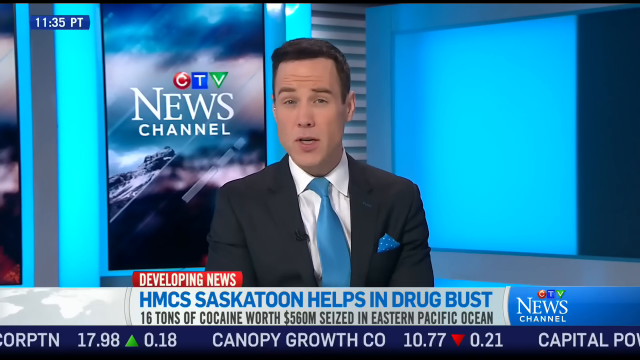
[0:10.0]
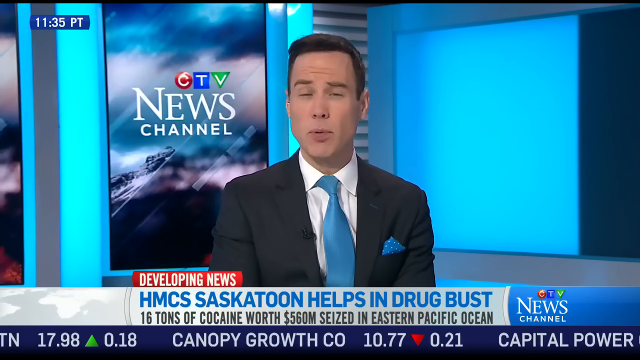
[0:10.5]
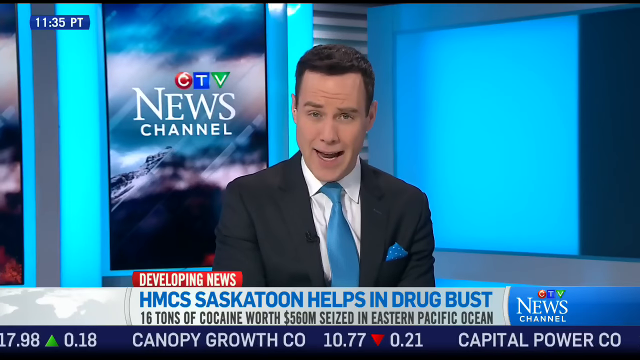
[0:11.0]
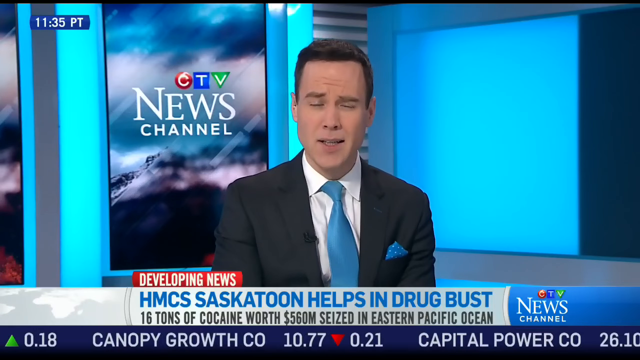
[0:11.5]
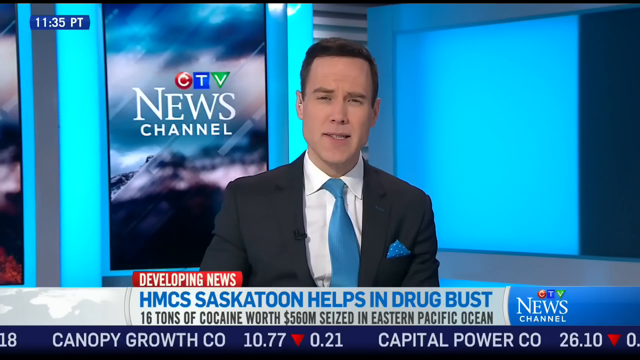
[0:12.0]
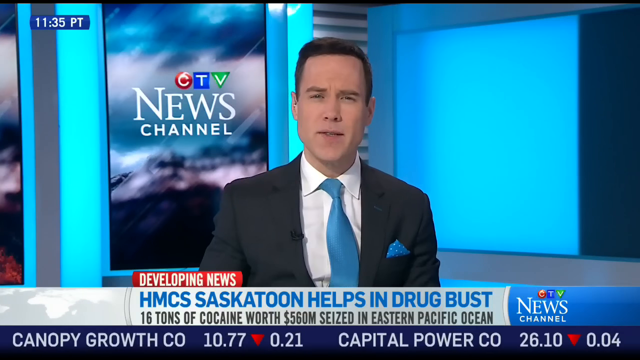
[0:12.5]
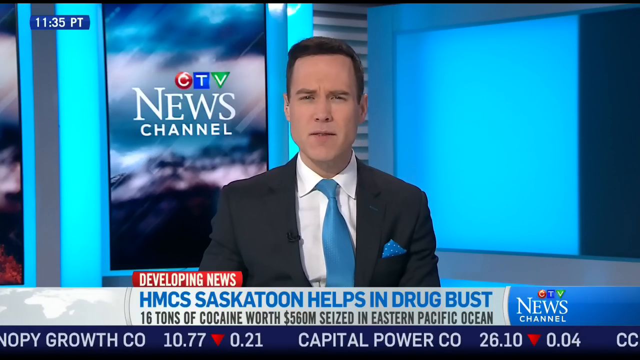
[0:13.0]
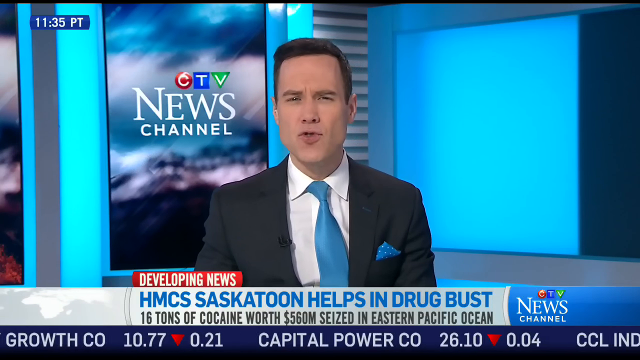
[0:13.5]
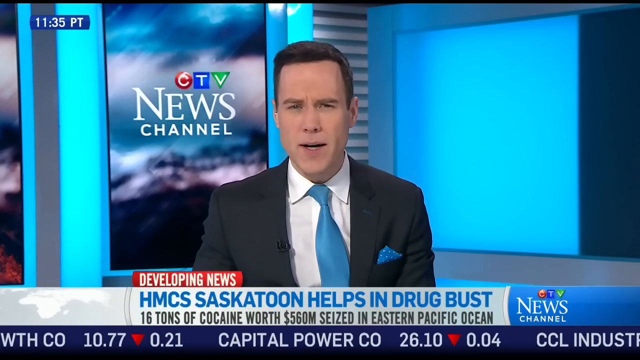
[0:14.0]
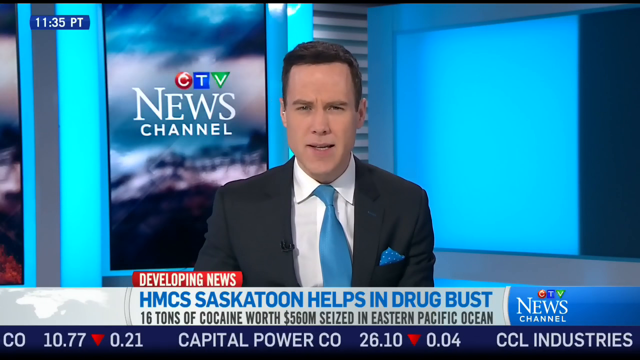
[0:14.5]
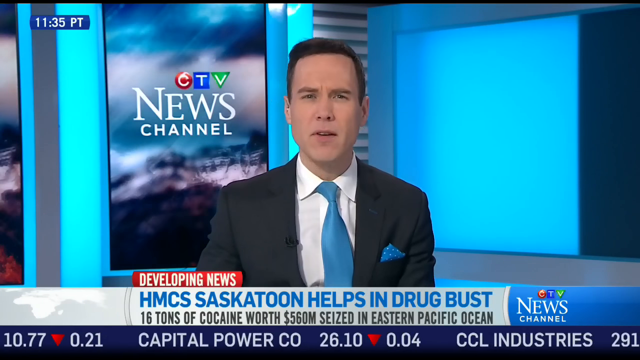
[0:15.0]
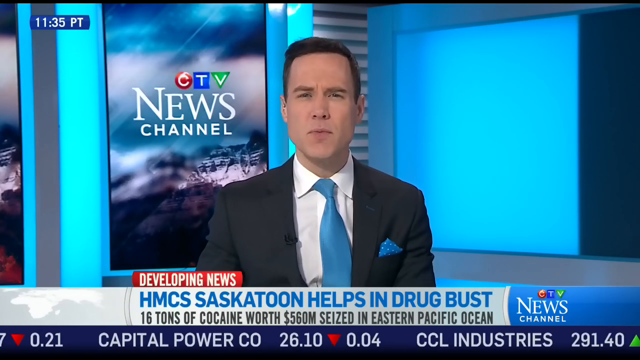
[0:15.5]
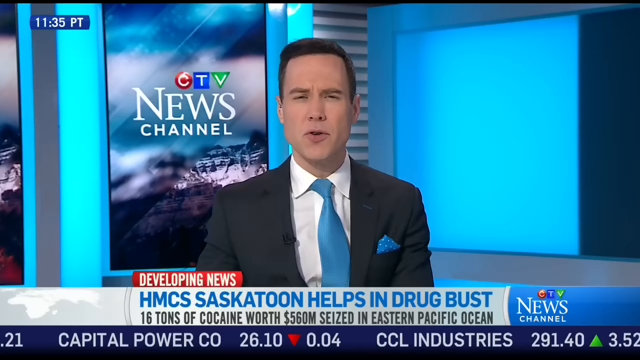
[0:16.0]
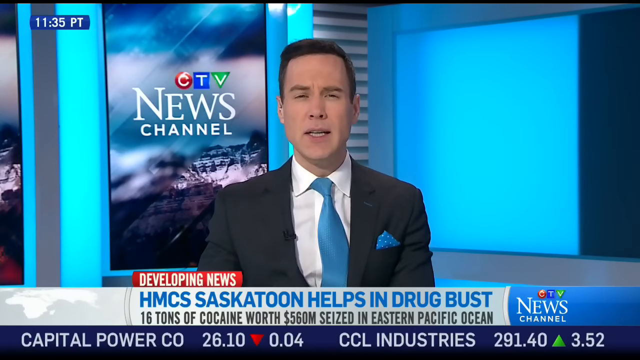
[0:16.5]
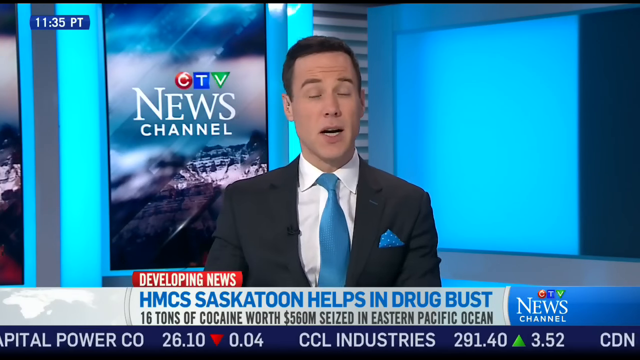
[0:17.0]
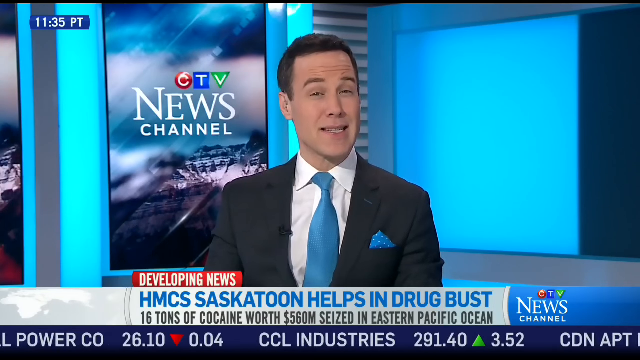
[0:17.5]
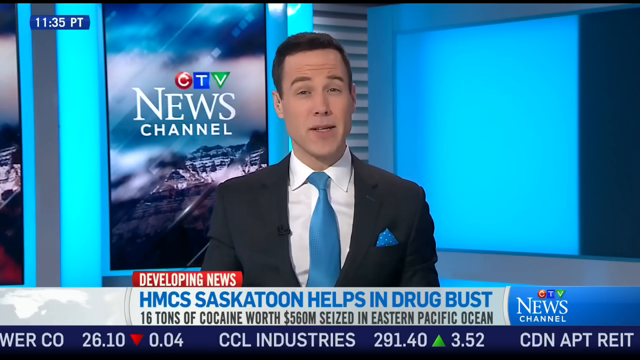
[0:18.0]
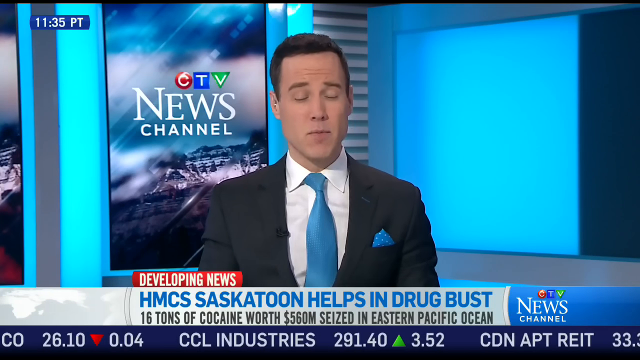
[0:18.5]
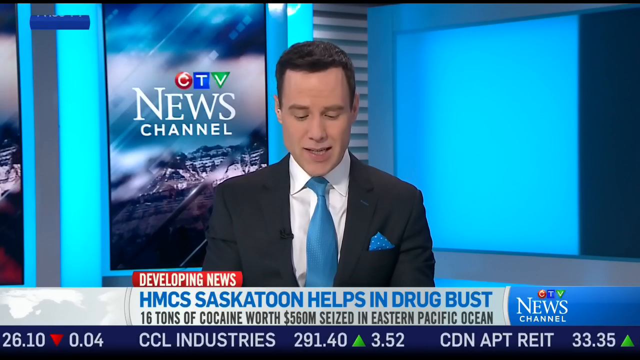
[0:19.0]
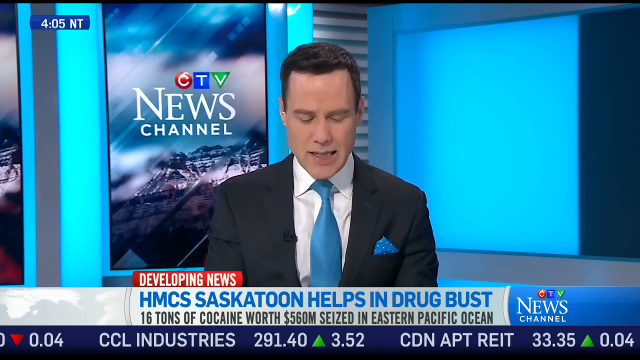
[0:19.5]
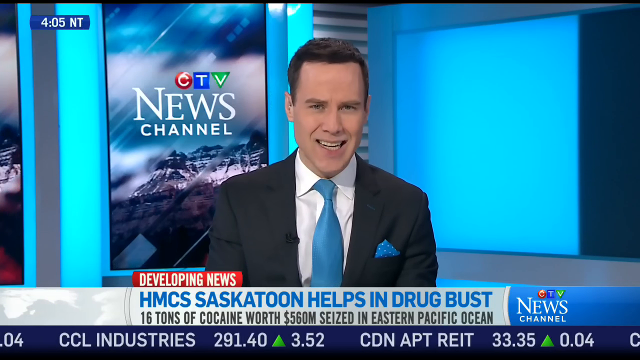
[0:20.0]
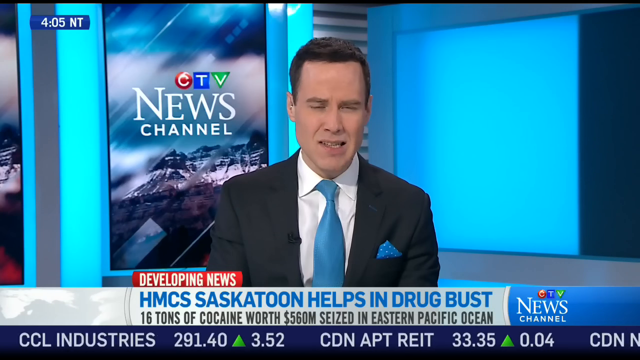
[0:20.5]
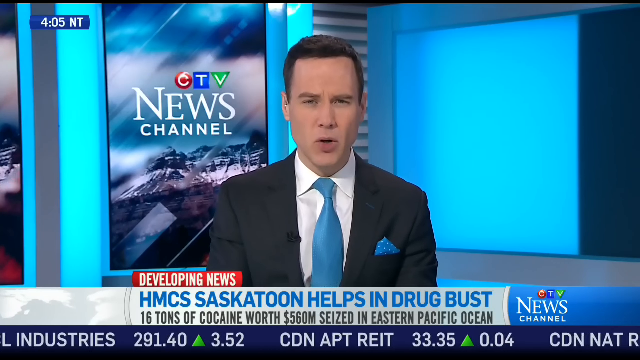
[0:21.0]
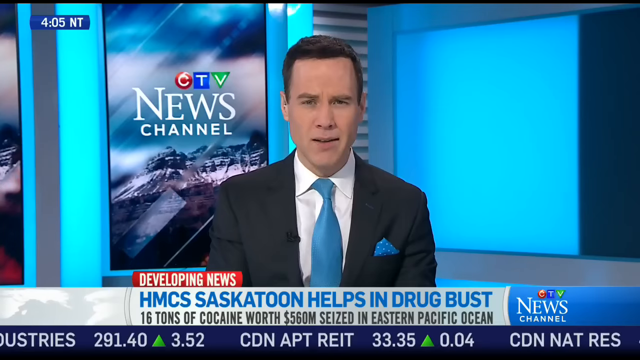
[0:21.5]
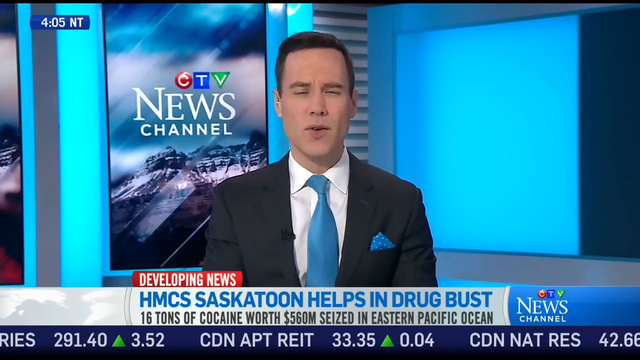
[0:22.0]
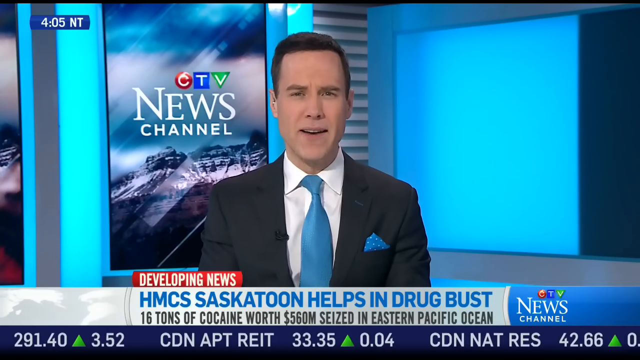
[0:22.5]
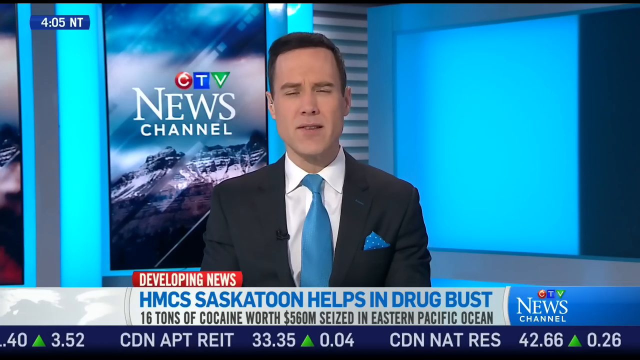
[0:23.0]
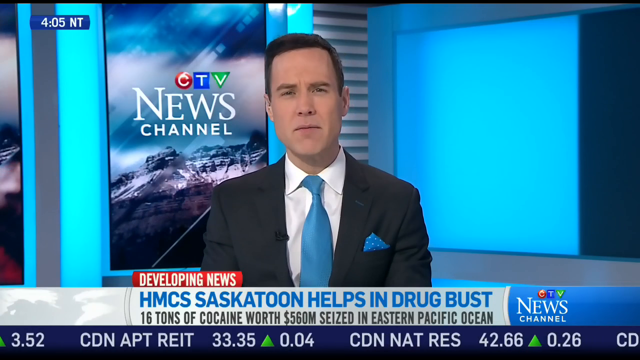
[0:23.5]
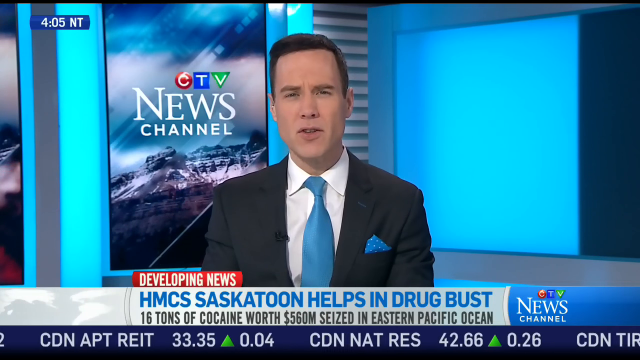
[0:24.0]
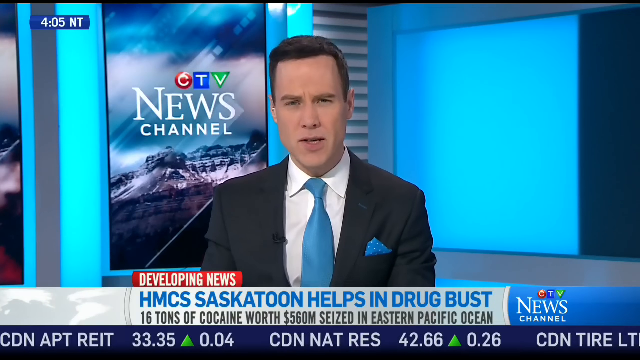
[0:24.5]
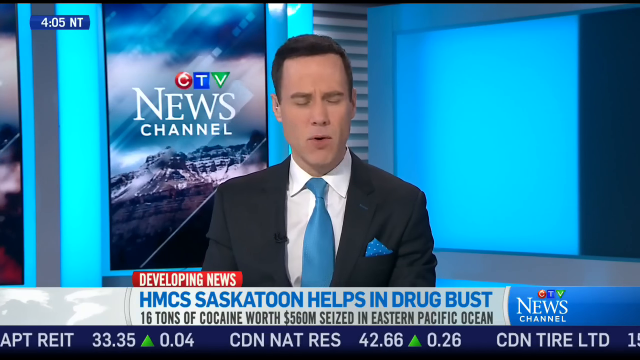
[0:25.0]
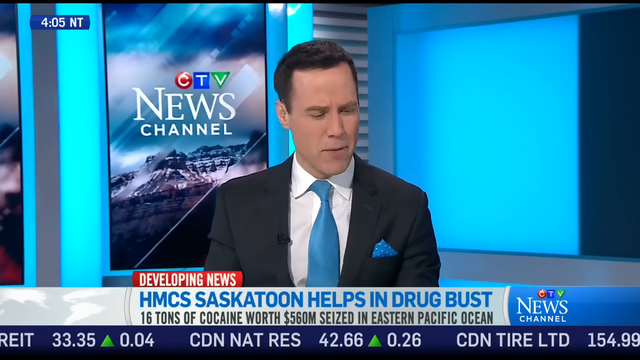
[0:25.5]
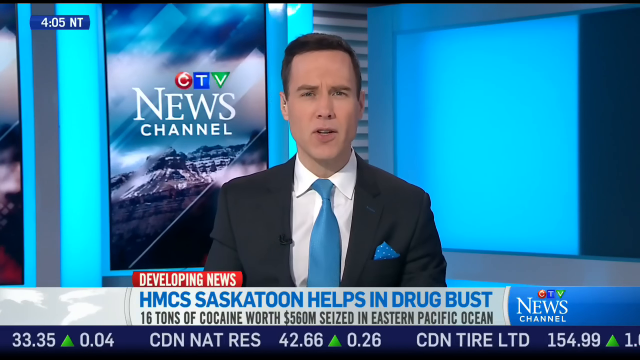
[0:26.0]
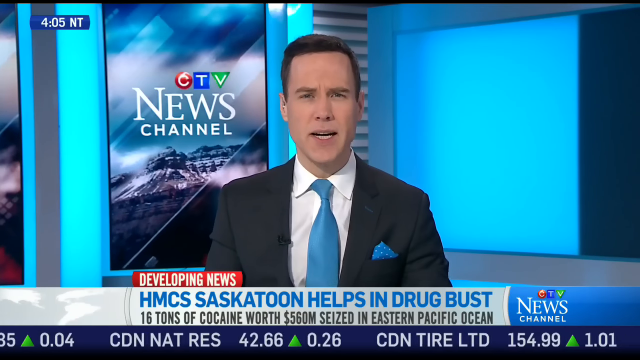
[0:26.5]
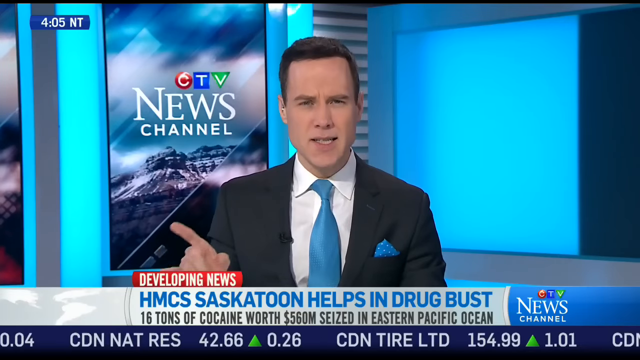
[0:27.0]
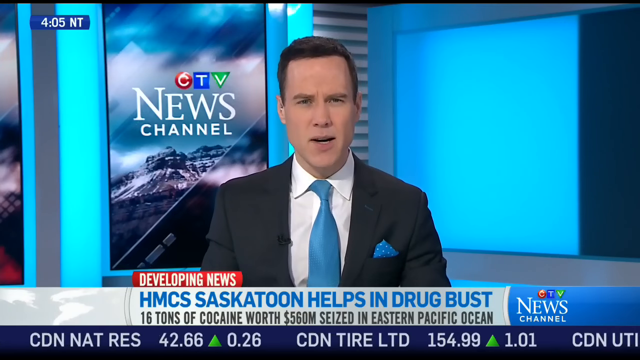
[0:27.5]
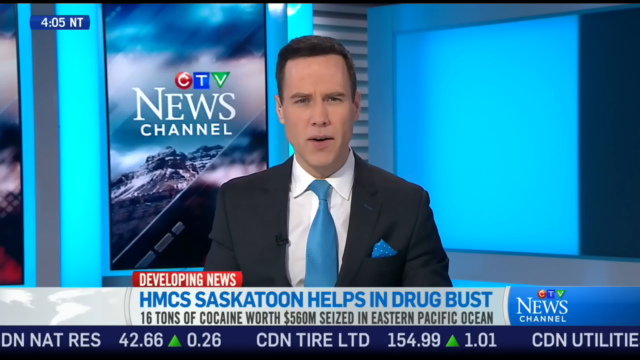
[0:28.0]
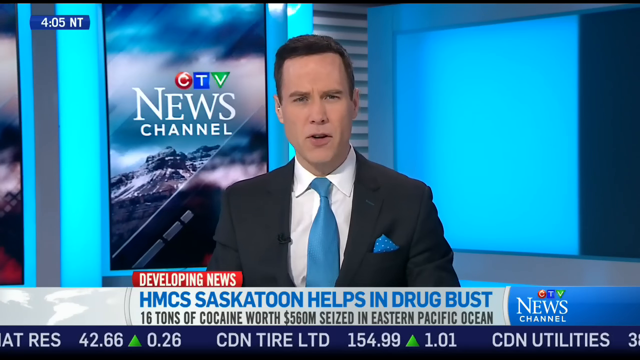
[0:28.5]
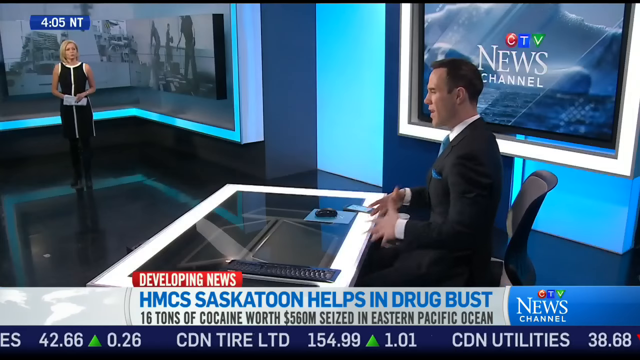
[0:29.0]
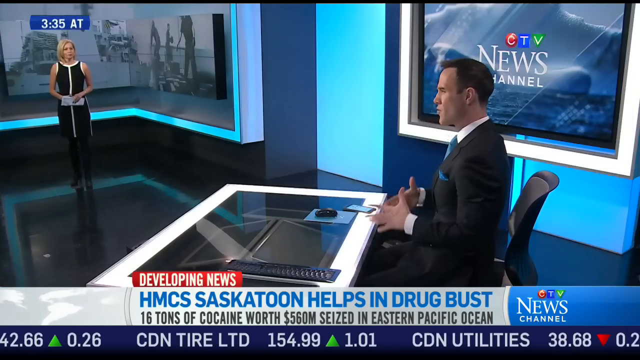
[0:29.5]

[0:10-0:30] On the CTV News Channel set, which has a blue background, the anchor in the front wears a black suit with a white shirt underneath, a blue tie and a blue handkerchief. The developing news text reads "HMCS Saskatoon helps in drug bust, 16 tons of cocaine worth $560 million seized in Eastern Pacific Ocean." He talks while tickers for different stocks run along the bottom, including Canadian Capital Power Co., CC Industries, CDN, Apt and REIT. The back is something like light blue. The camera then pans to a different angle, showing another news anchor, a blonde woman, in the distance from the desk where he is sitting.